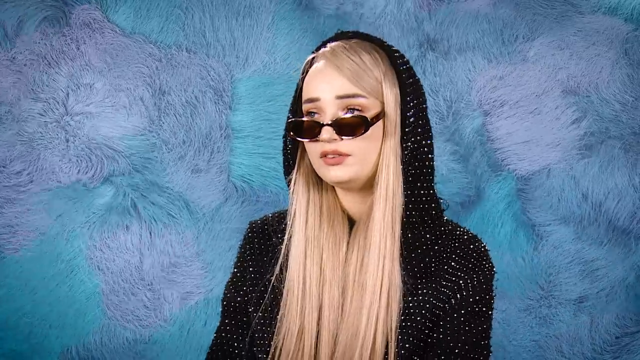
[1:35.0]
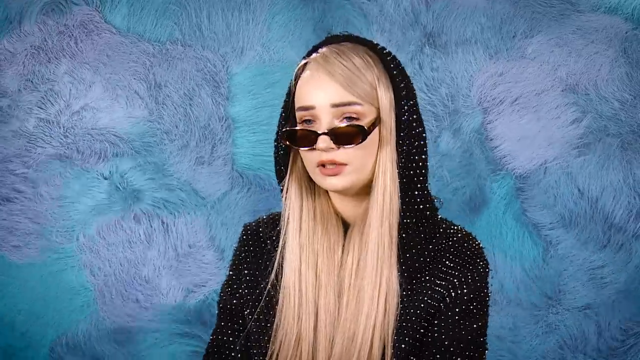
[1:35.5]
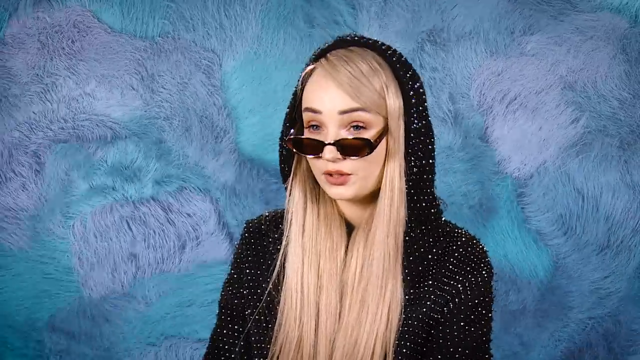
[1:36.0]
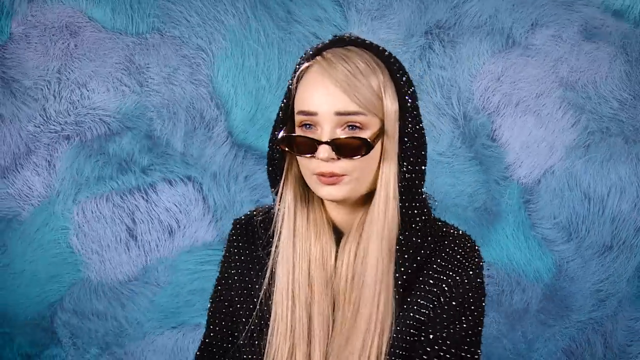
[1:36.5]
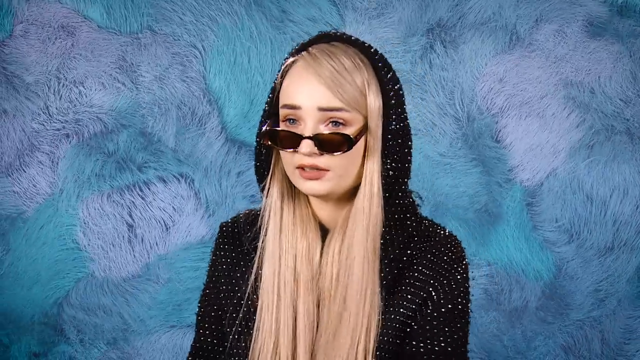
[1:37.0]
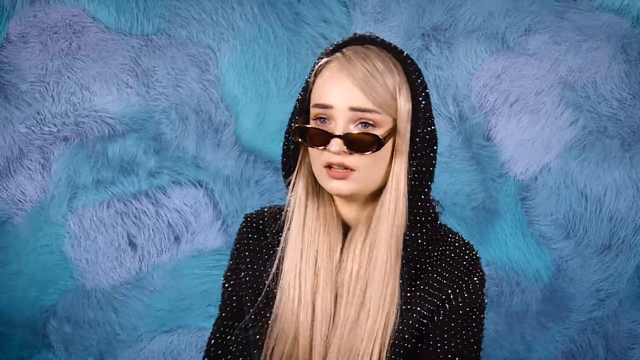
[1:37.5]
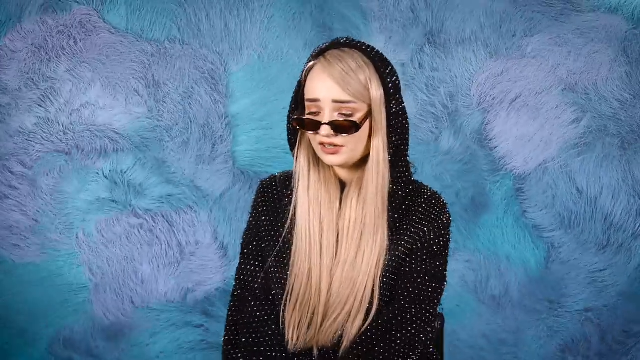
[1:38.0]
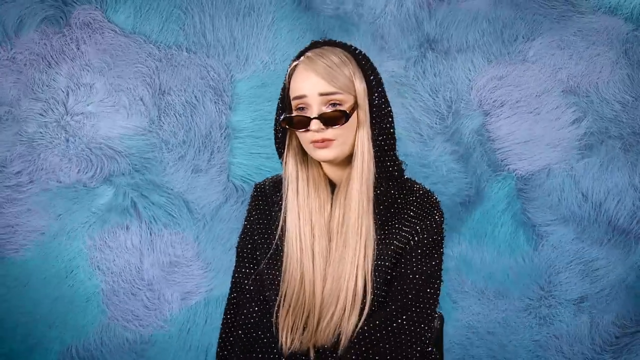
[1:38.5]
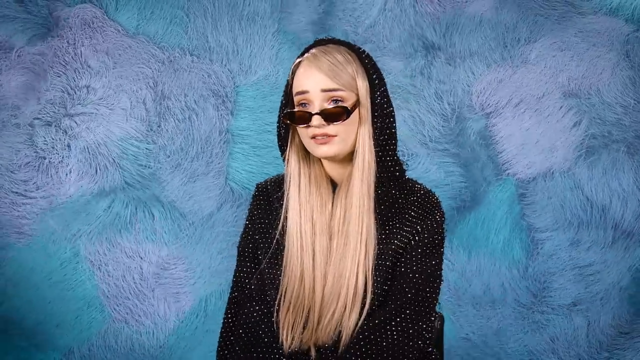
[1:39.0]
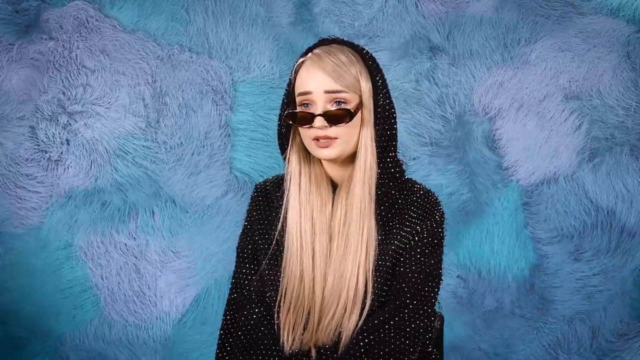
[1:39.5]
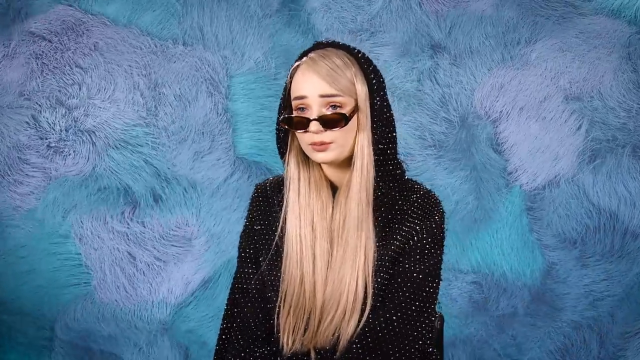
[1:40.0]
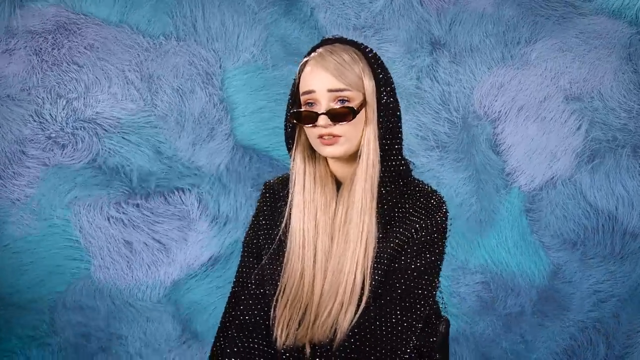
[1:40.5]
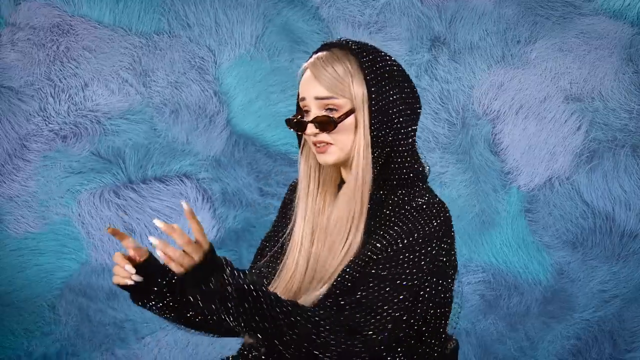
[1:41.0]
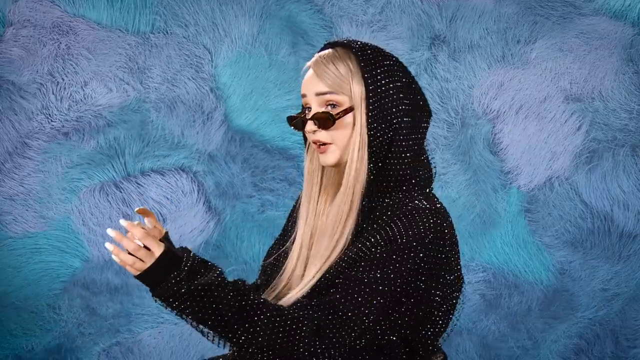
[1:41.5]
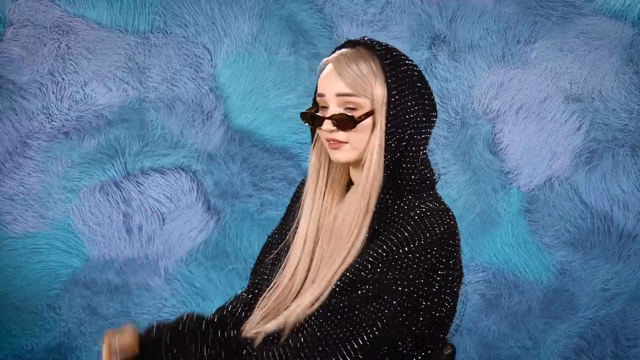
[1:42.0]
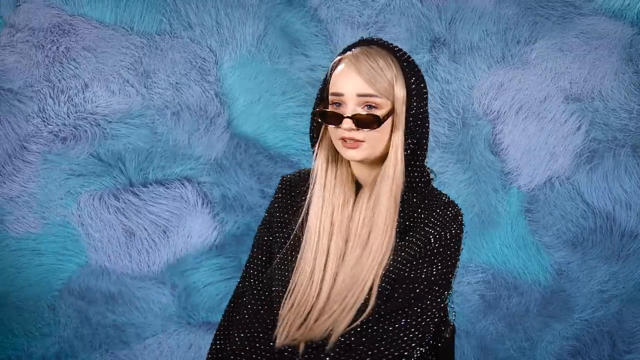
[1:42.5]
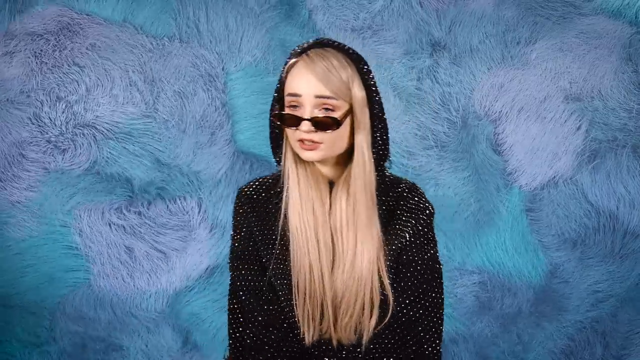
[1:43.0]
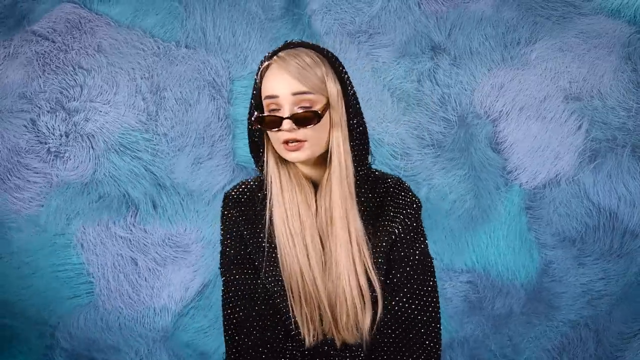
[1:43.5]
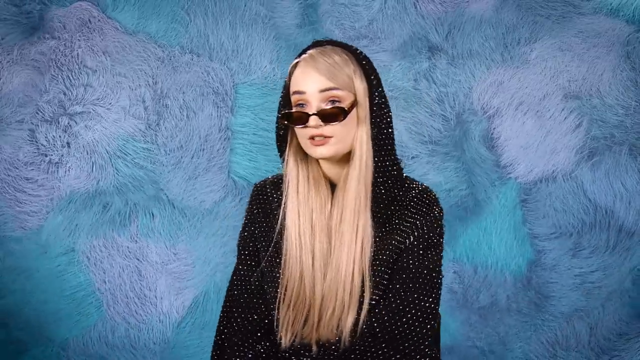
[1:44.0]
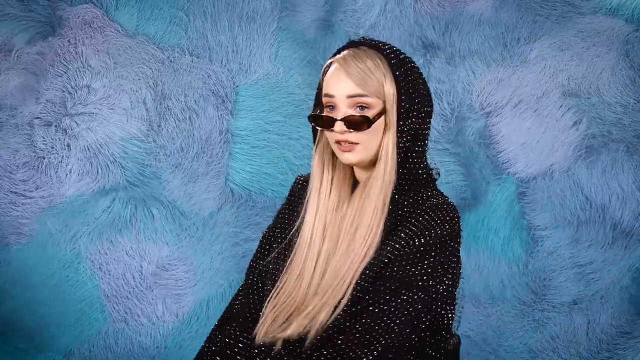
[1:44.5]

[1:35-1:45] One person sits in a black chair, occasionally swinging and swiveling around in it. They have long blonde hair and fair skin and wear makeup including lipstick, eyeshadow and mascara, and a black hoodie with sparkly sequins, the hood pulled up onto their head. They talk, gesturing with their hands, and have long acrylic nails. The background is light blue and light purple, looks like some kind of artificial fur, and moves almost as if wind is blowing through it or as if it is breathing.